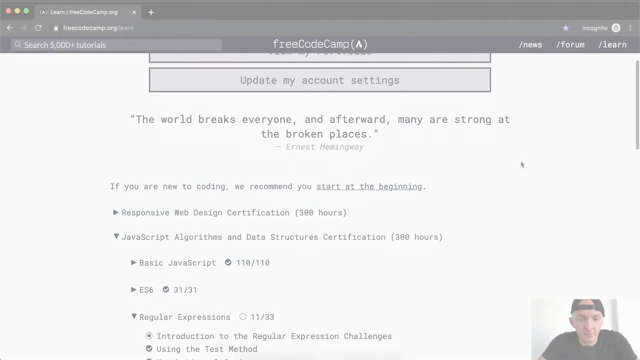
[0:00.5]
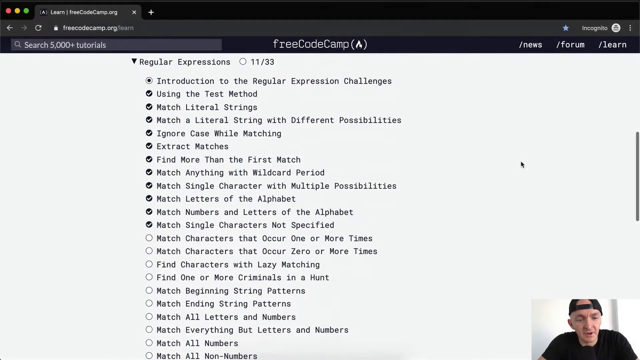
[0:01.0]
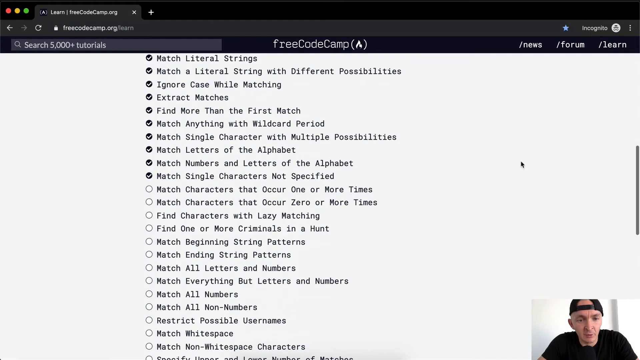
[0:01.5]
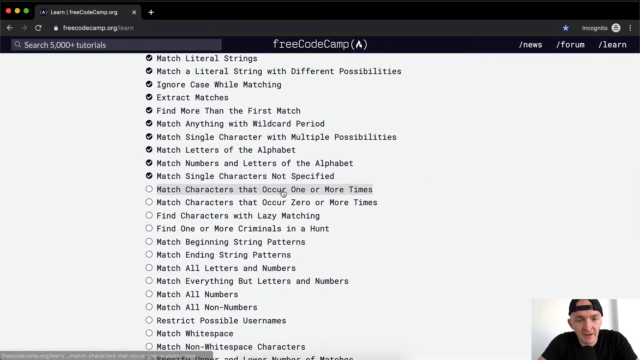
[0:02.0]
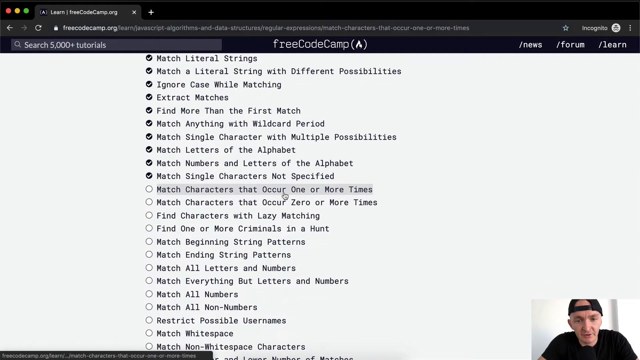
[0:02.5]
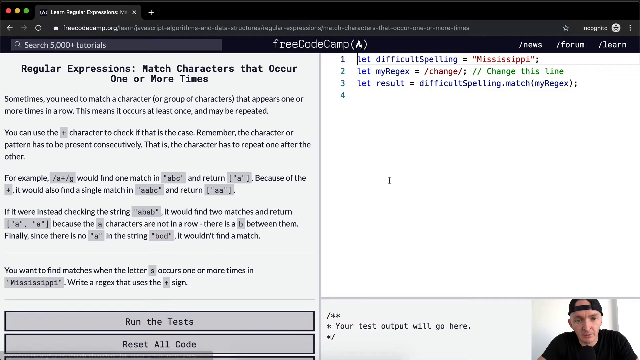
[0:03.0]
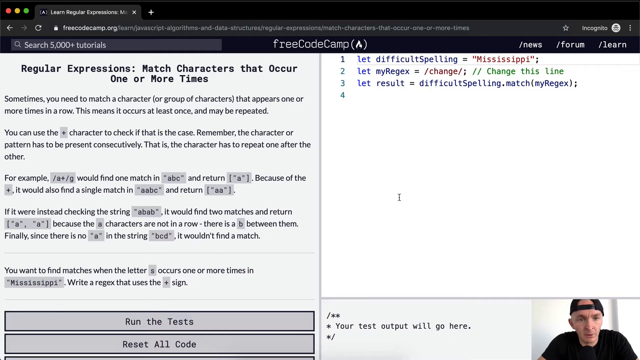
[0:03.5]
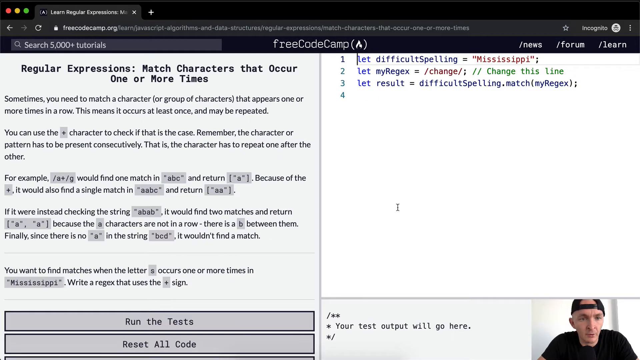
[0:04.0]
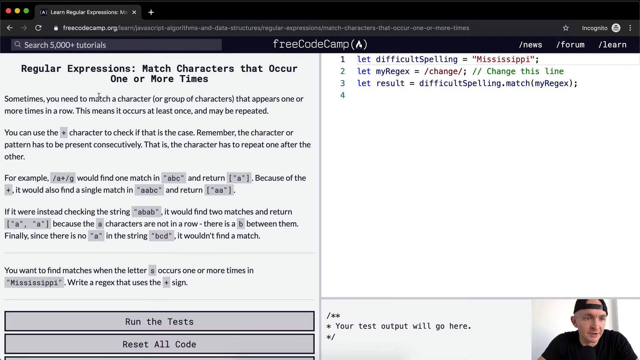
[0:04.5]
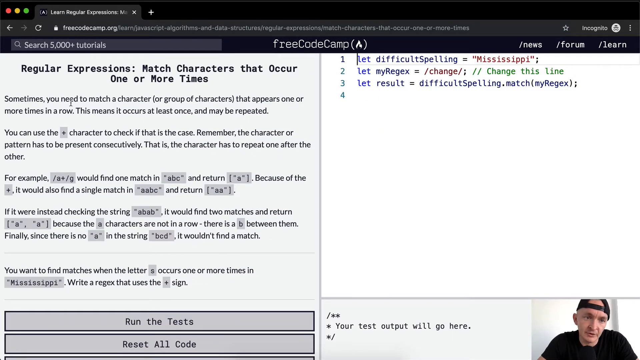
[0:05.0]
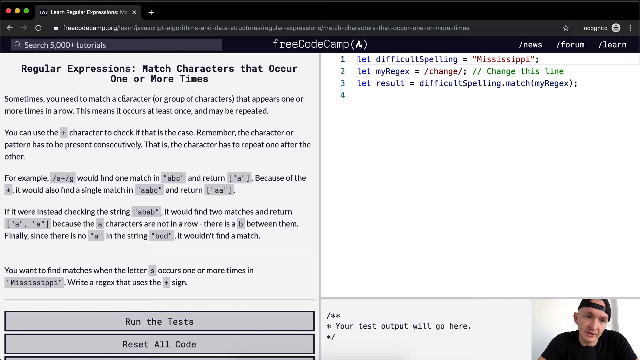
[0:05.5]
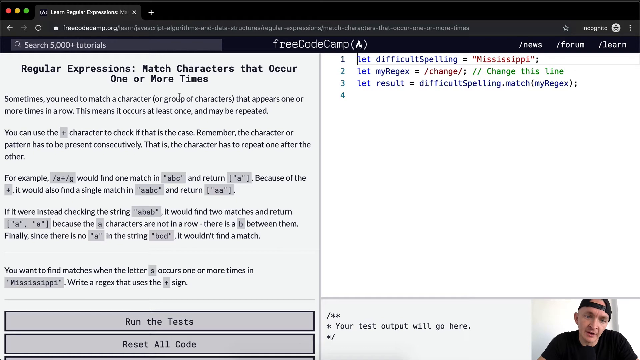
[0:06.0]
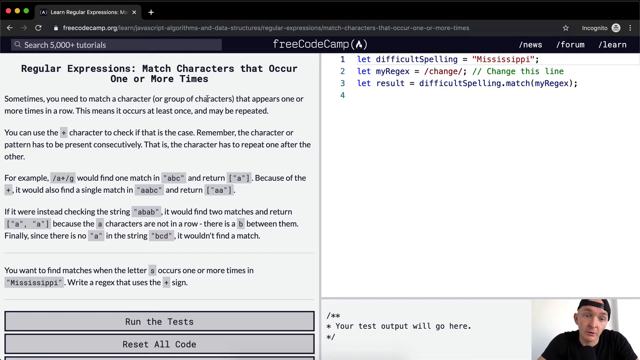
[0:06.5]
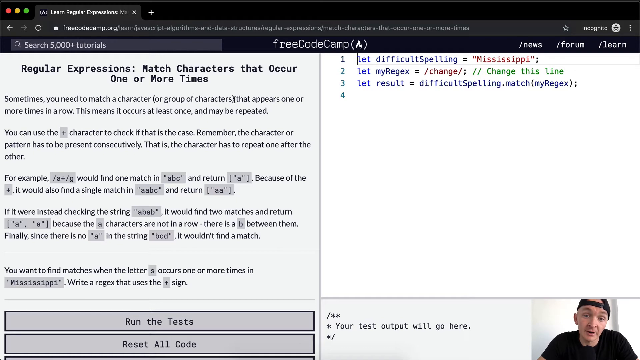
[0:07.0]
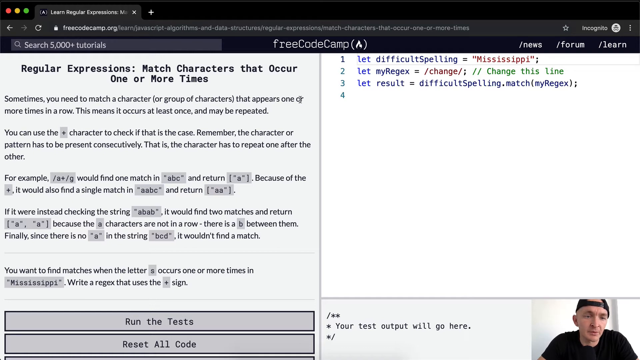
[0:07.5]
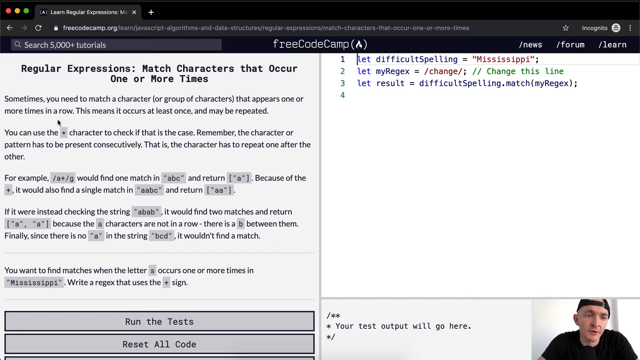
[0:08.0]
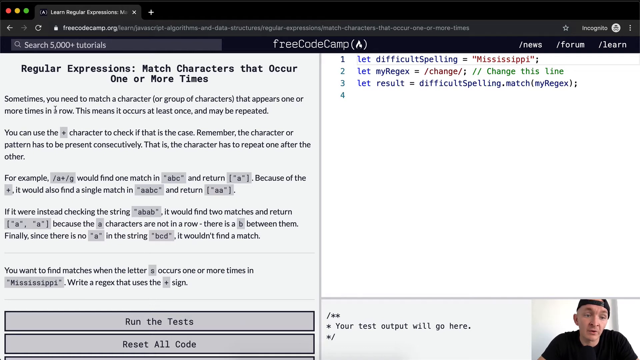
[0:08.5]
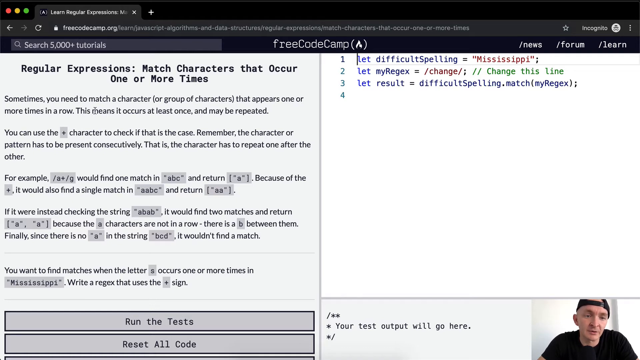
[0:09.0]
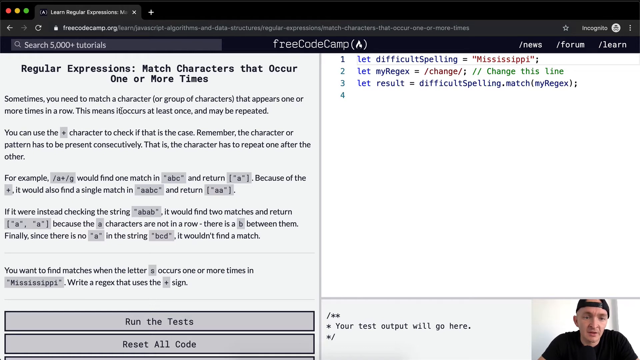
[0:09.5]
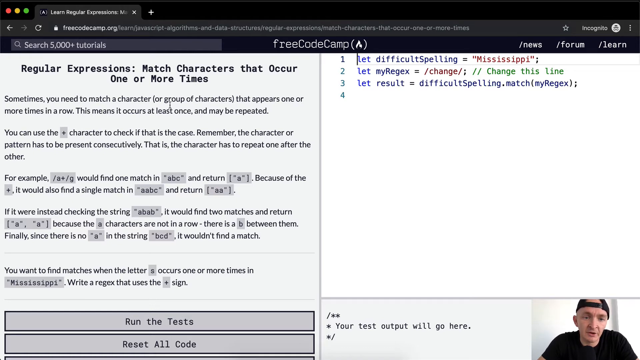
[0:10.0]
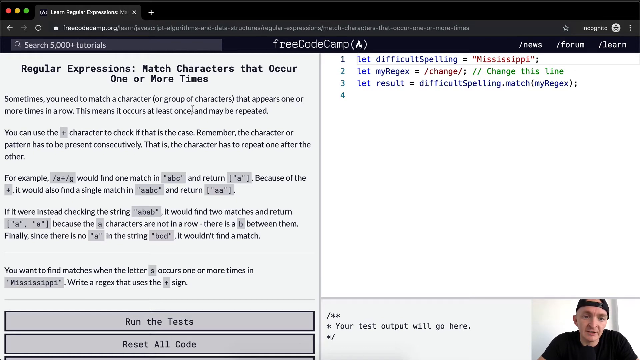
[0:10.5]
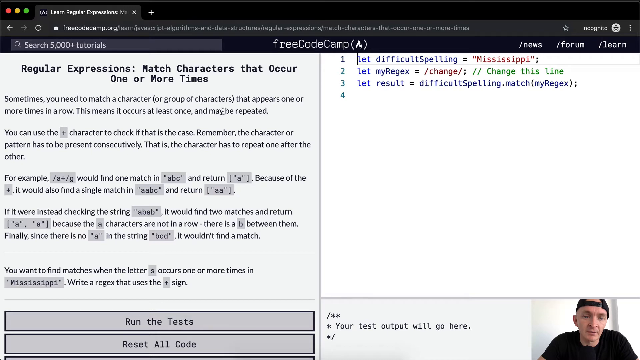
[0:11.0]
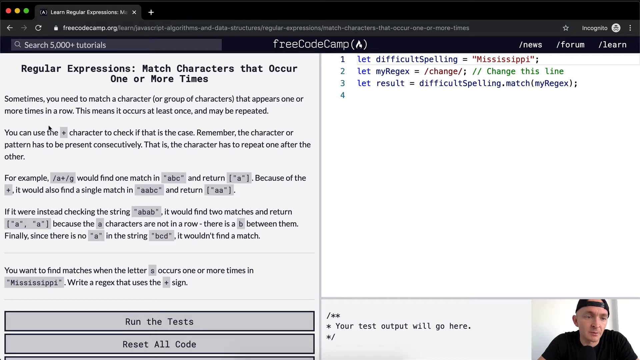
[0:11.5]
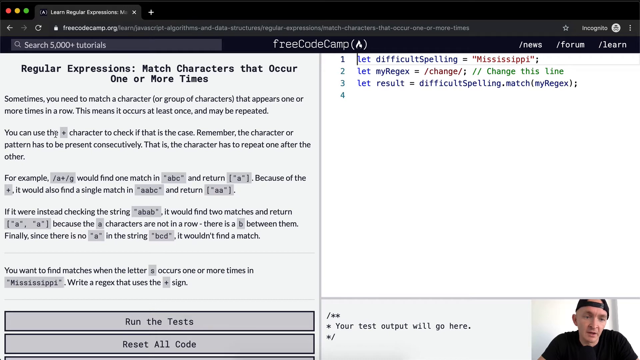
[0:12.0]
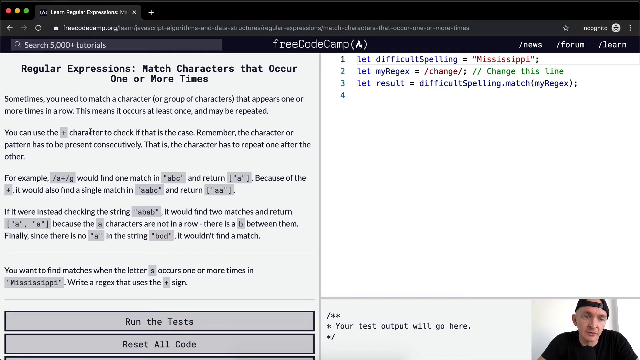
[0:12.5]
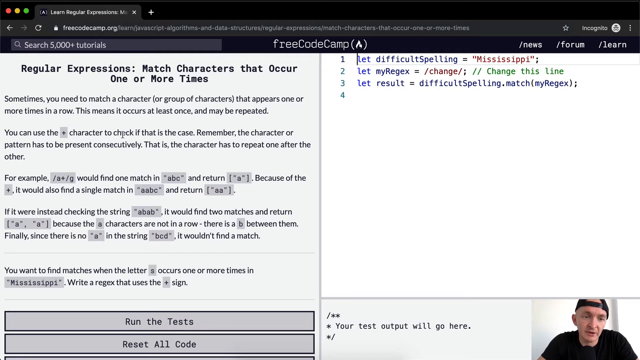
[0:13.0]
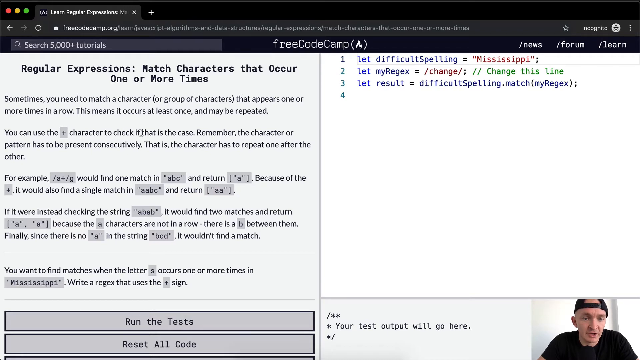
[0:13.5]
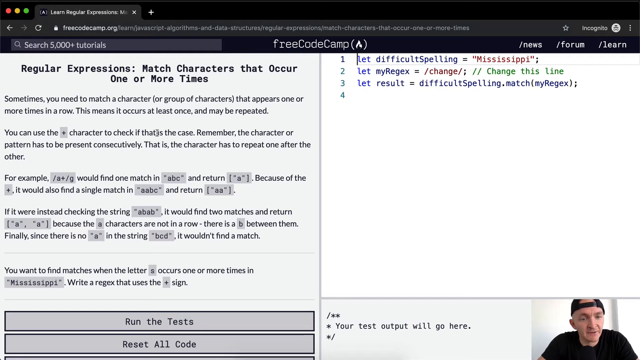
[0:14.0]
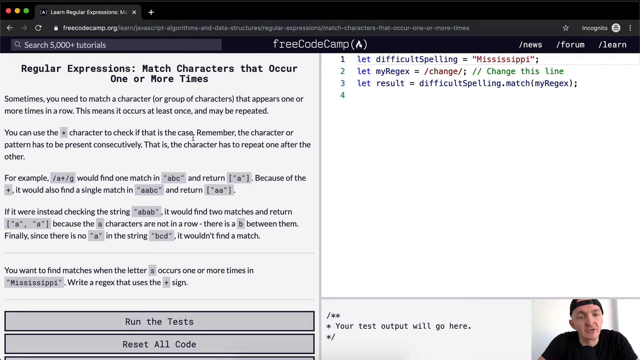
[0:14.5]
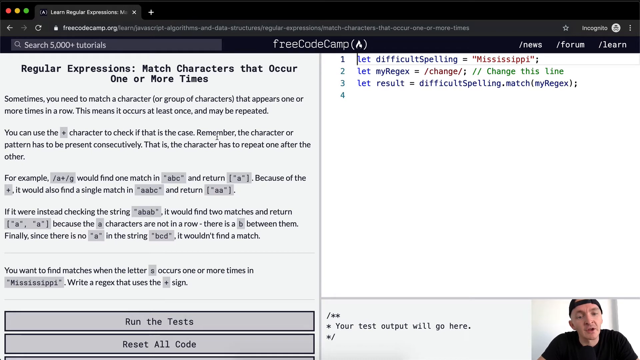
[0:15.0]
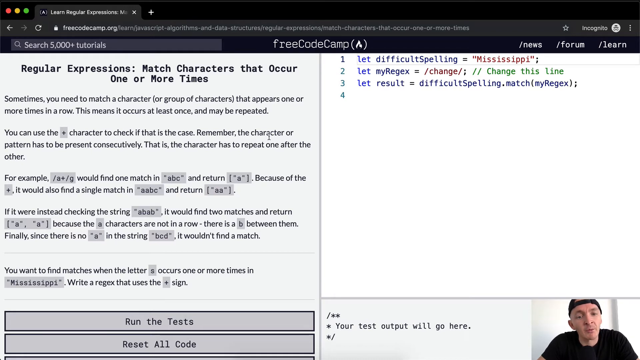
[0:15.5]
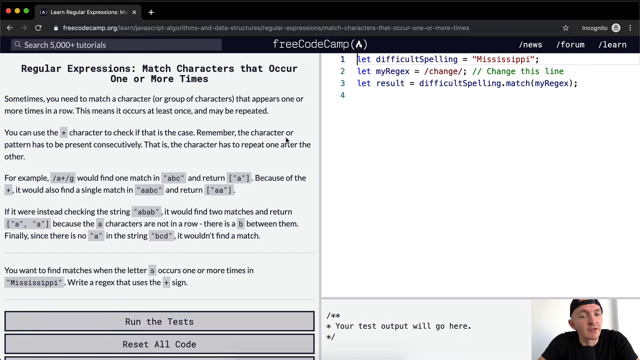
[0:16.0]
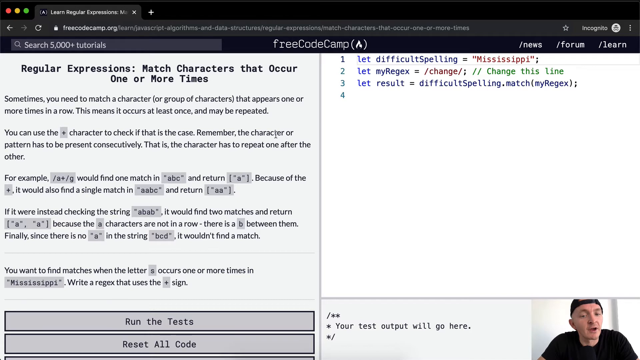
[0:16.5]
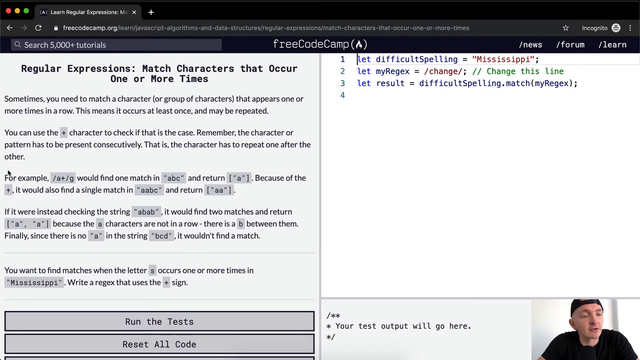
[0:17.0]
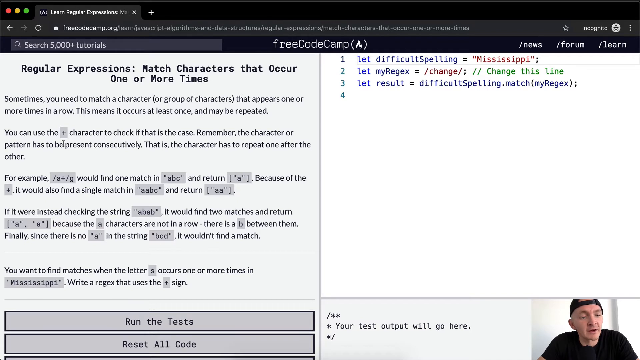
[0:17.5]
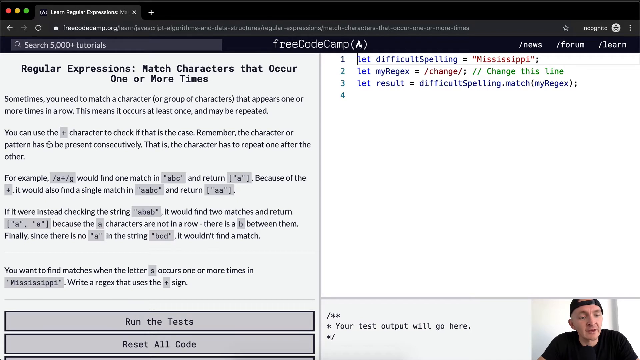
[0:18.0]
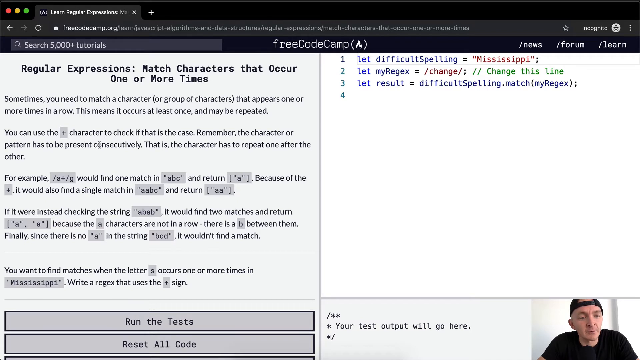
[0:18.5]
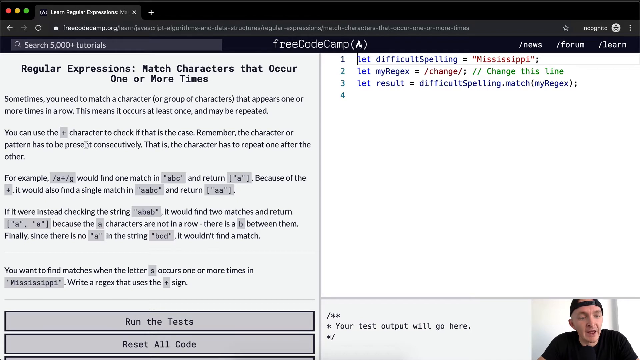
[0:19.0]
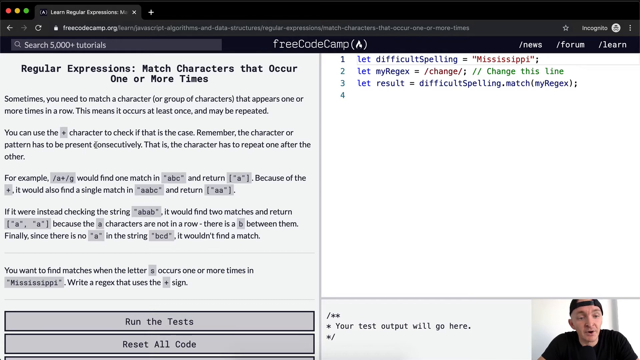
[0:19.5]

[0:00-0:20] A solid white screen quickly changes into a white background with writing scrolling across the top. At the very top is an open tab that says "free code camp" with an "a" in parentheses, along with the taskbar. Below that is a lot of writing recommending that people new to coding "start at the beginning", explaining why and what the beginning is: basic javascript, es6, regular expressions. Dates and percentages of completion are listed beside these items so progress can be marked. A large list of items appears, dealing with regular expressions and matching characters, and the author moves the mouse pointer down the screen as they talk.